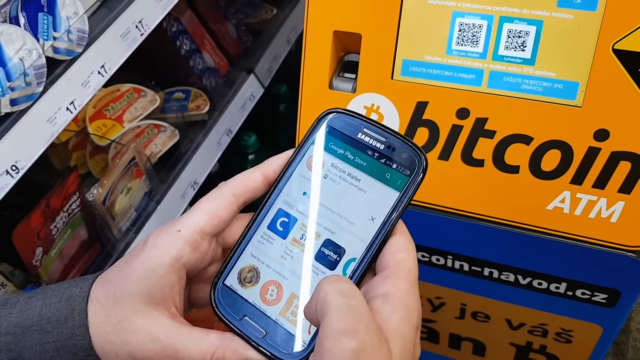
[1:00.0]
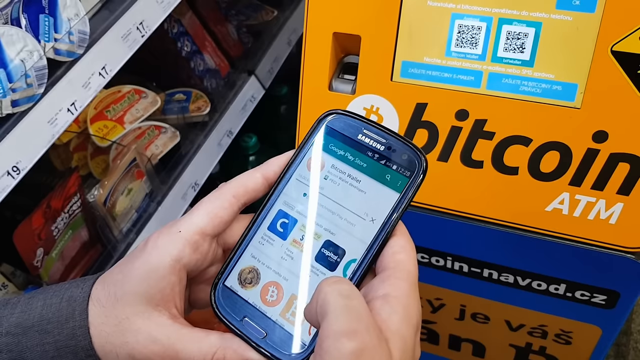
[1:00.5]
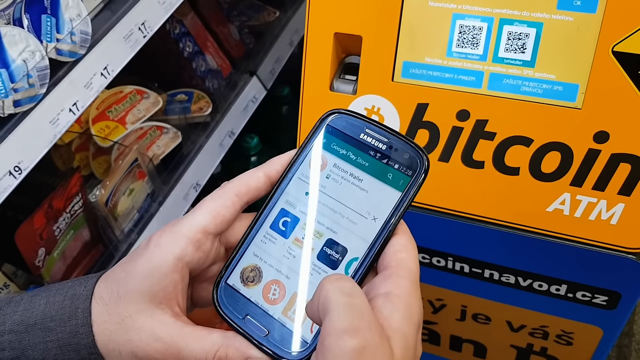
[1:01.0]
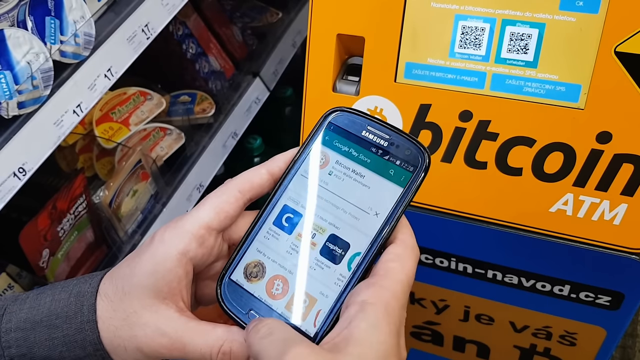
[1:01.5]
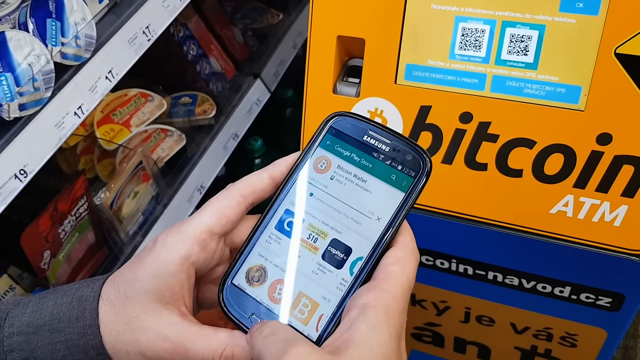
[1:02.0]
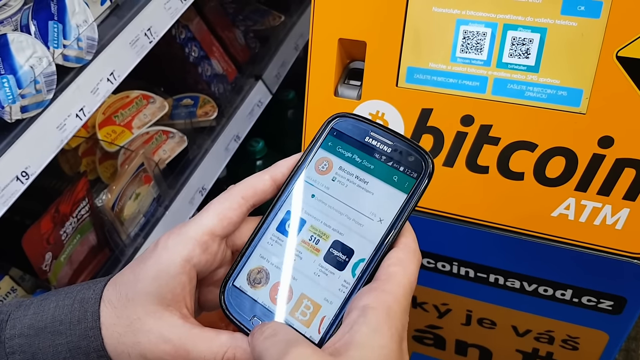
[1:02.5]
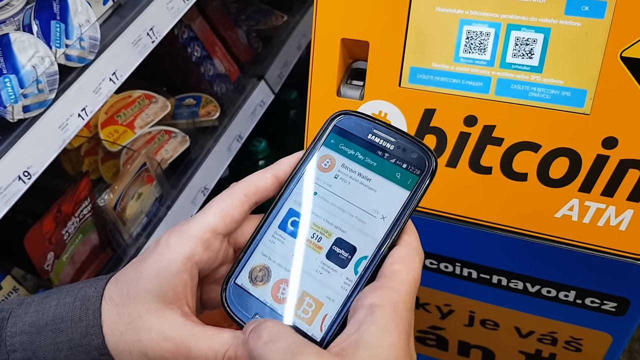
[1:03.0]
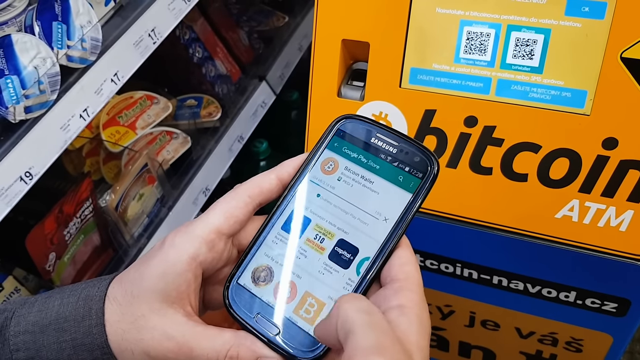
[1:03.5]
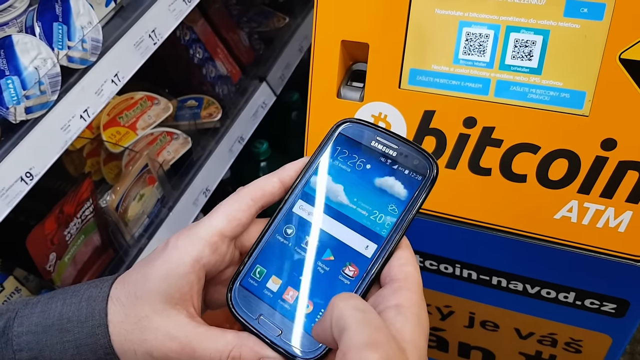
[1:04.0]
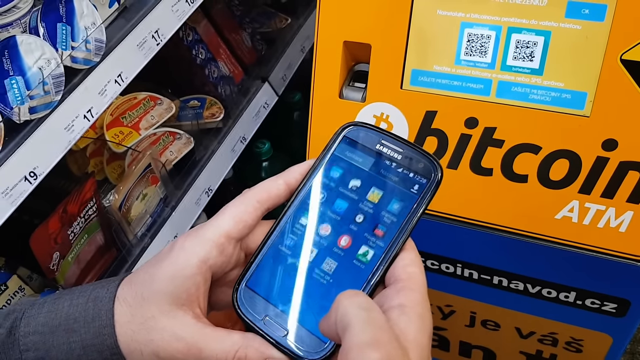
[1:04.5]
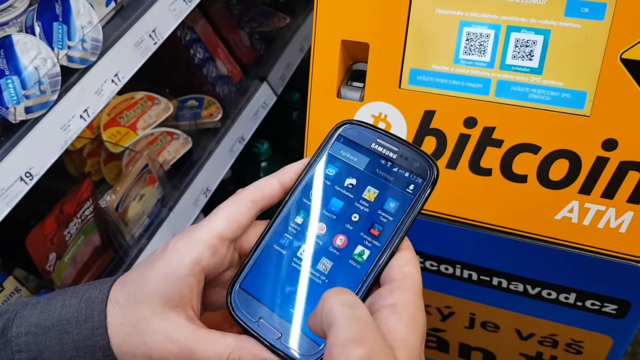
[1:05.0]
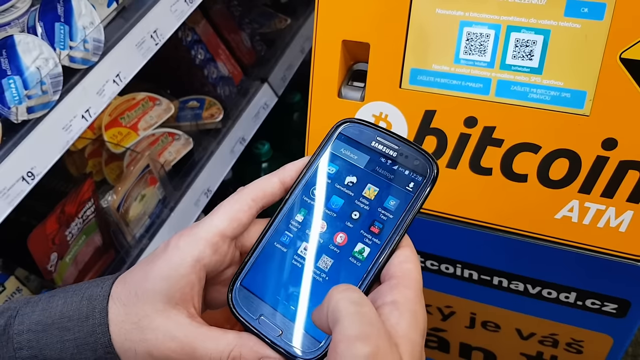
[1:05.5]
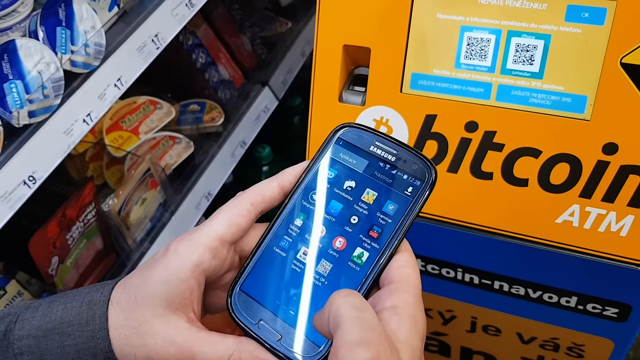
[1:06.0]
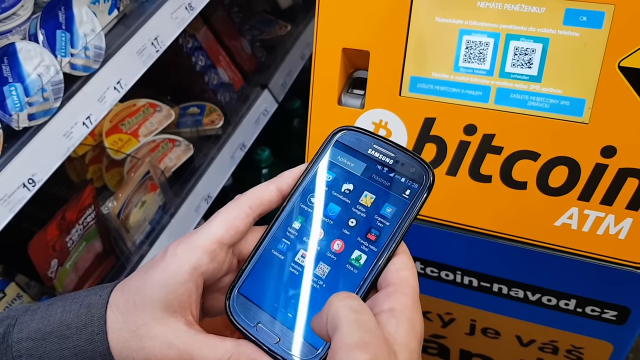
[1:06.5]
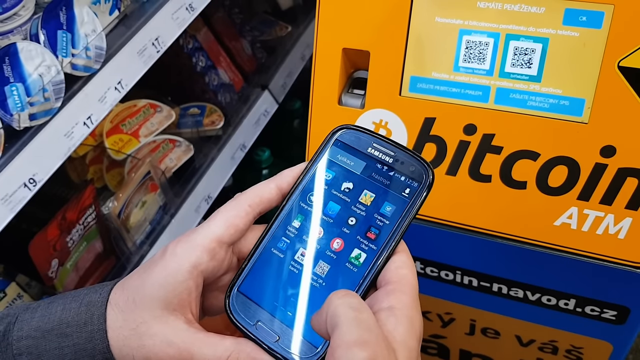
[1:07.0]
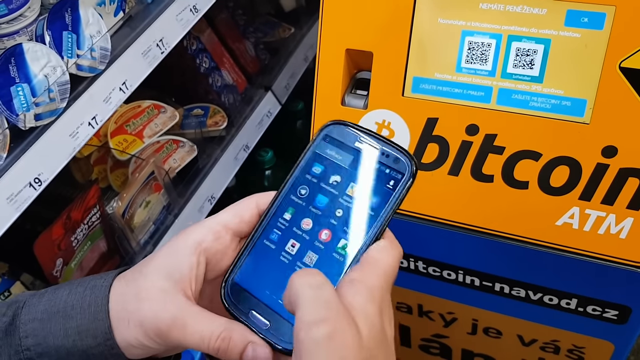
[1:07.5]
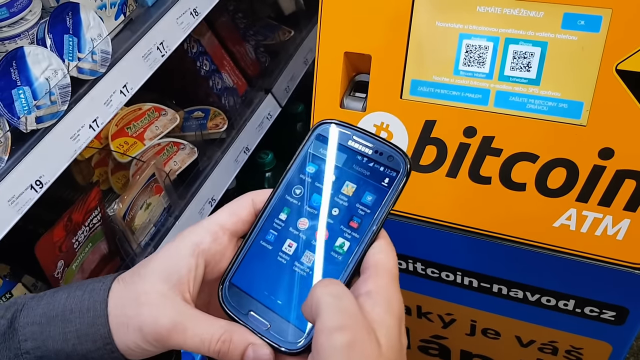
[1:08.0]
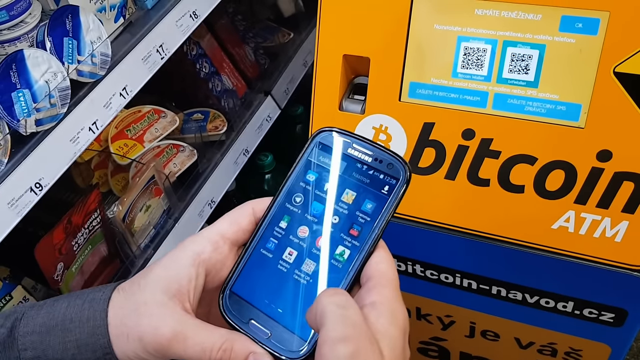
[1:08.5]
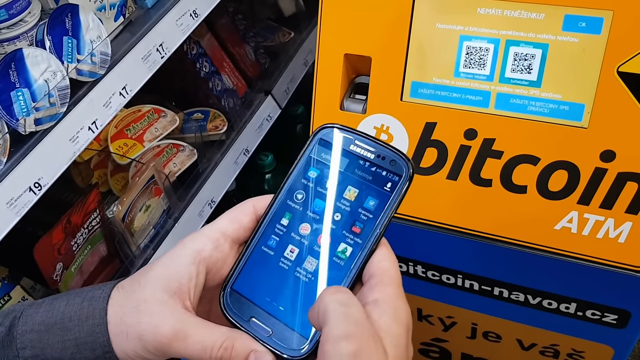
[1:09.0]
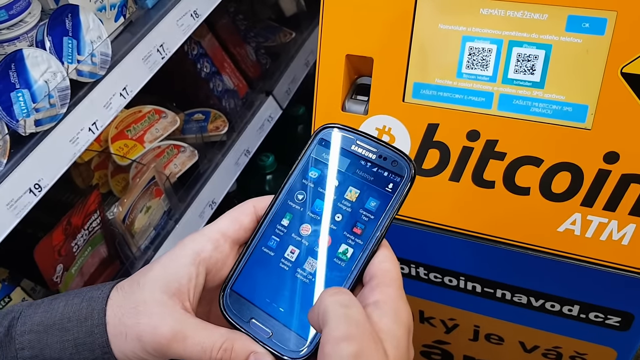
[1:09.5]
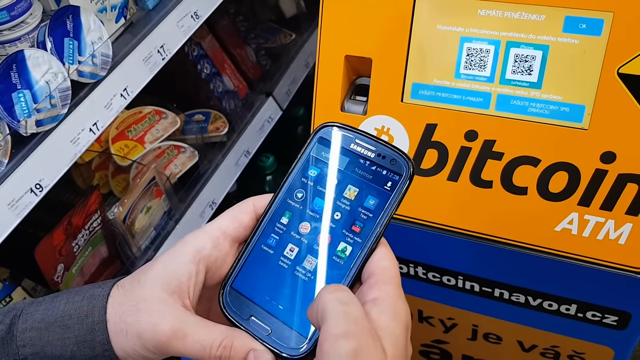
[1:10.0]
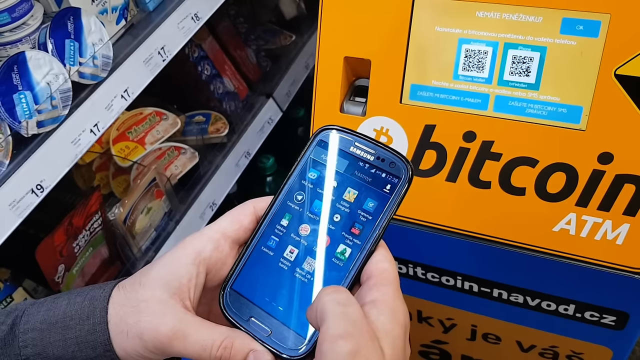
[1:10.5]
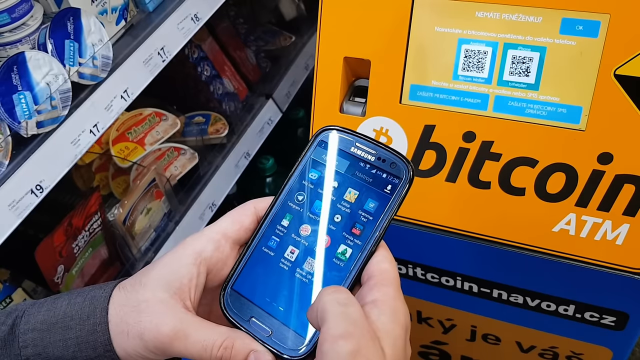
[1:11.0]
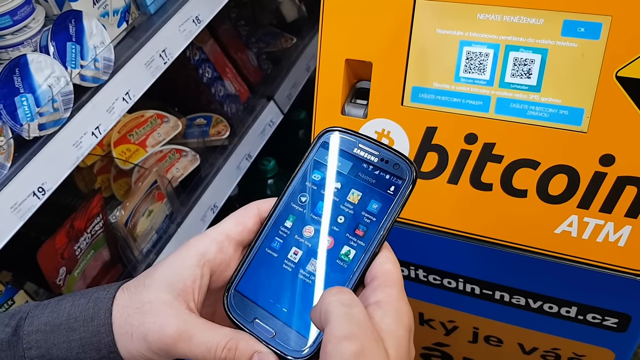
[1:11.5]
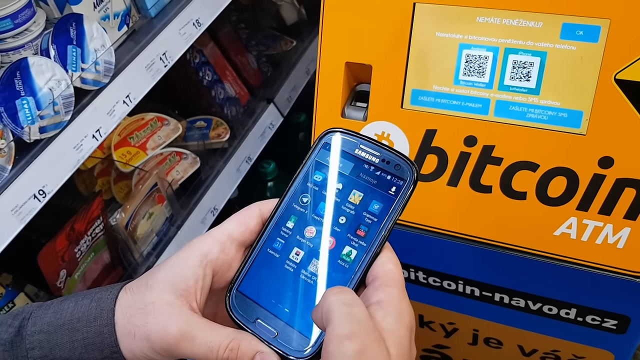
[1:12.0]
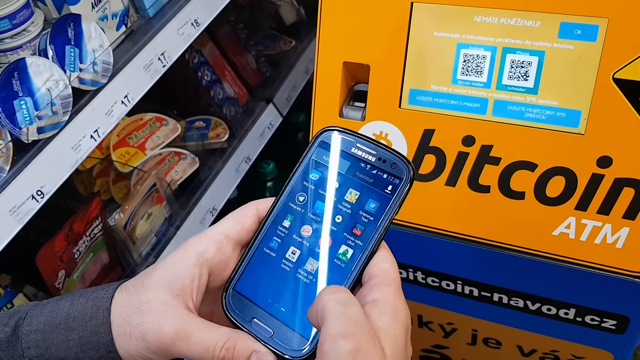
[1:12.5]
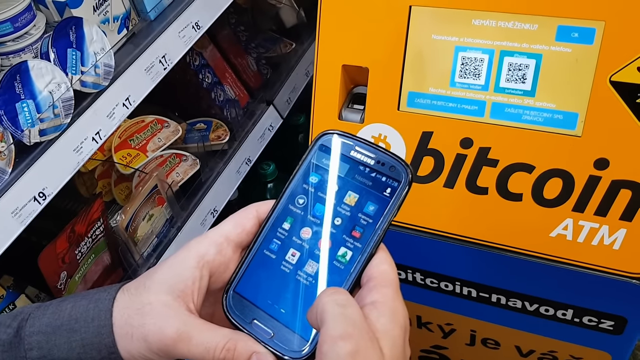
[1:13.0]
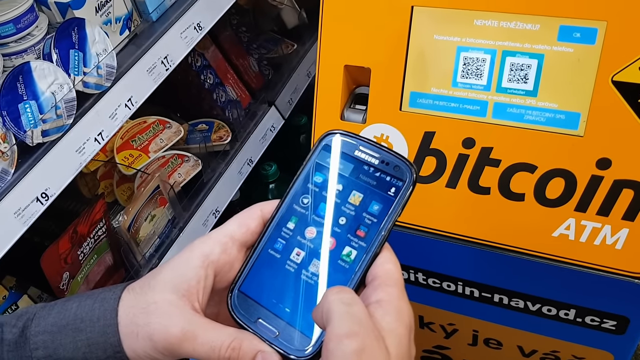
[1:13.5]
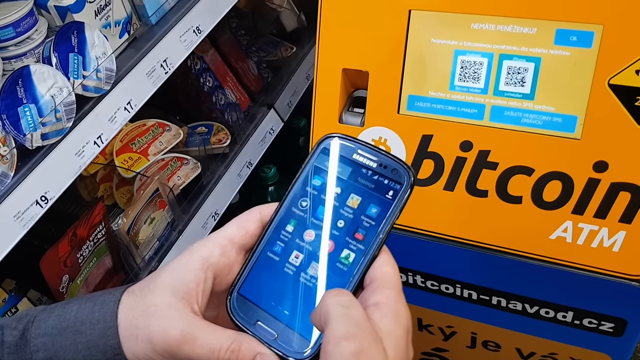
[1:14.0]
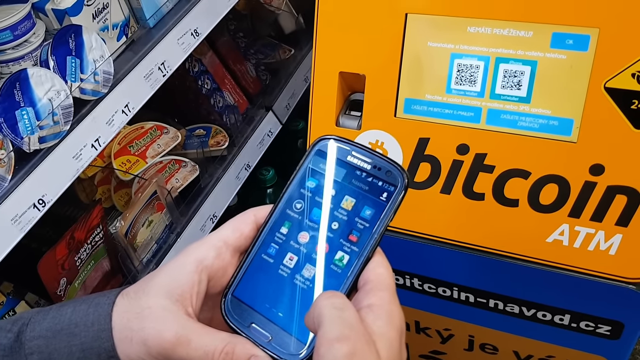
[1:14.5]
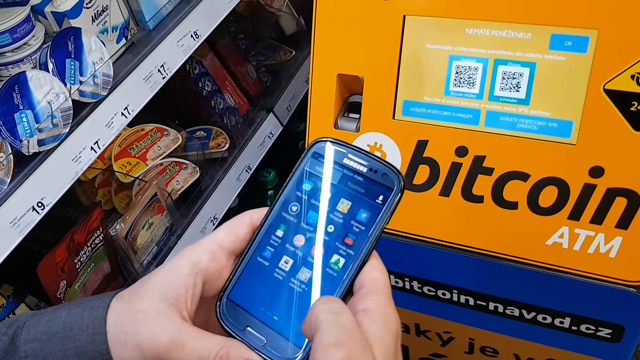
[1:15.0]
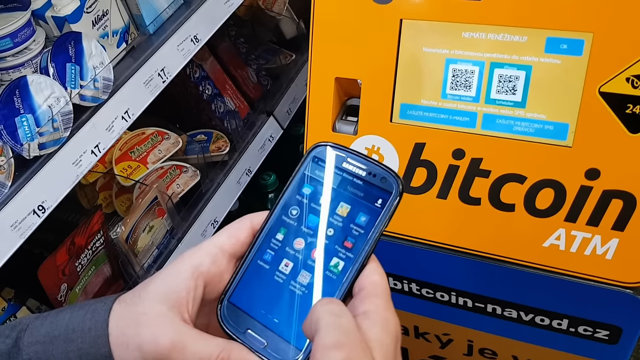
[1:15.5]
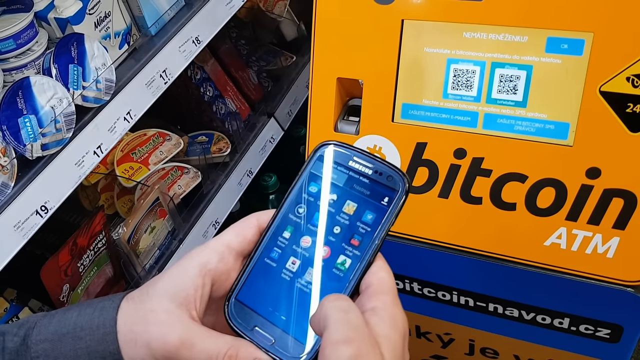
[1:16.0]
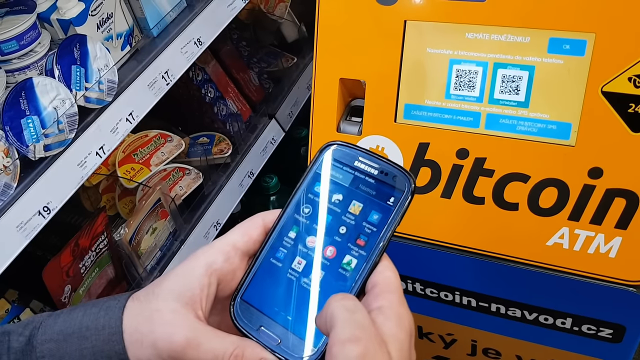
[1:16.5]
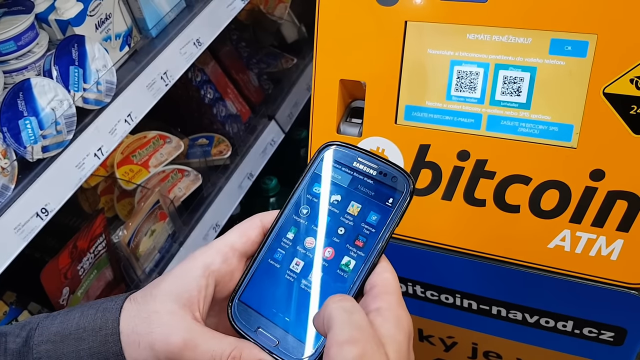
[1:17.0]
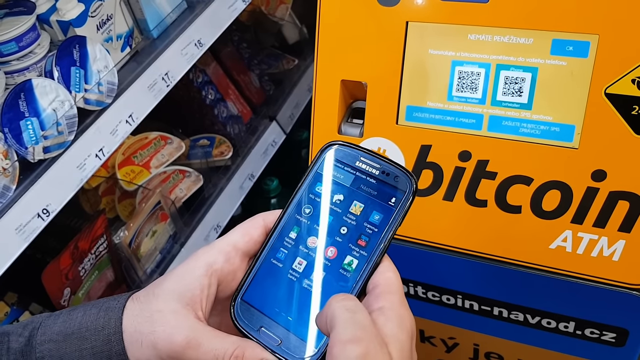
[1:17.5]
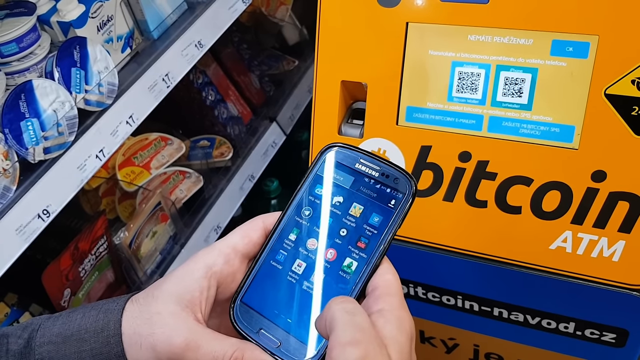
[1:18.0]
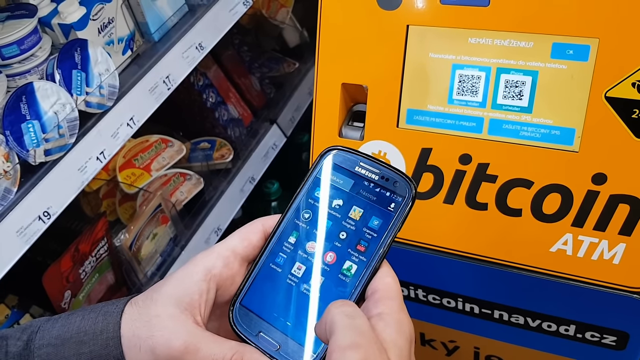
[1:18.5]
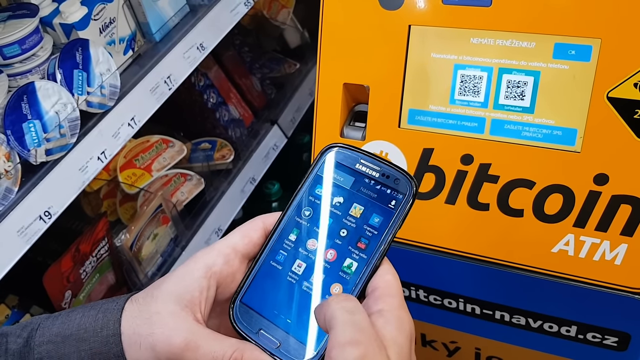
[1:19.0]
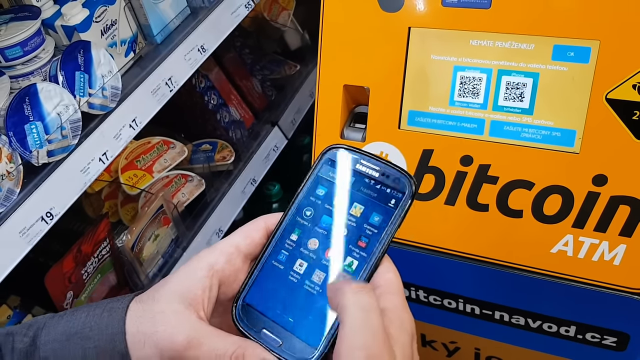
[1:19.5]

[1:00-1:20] The user holds the phone in both hands at the bottom of the screen, with the Bitcoin ATM, its digital touchscreen, and the phone's screen all visible. The app brought up by the scanned QR code is downloading, and a progress bar fills in the center of the phone screen. When the download finishes, the user presses the button just under the phone's screen, which goes to the phone's home page and then to the main apps menu. The user scrolls to the end of the list and waits for the new app to appear at the bottom. Once it appears, the user moves their thumb over the icon and selects the new app.